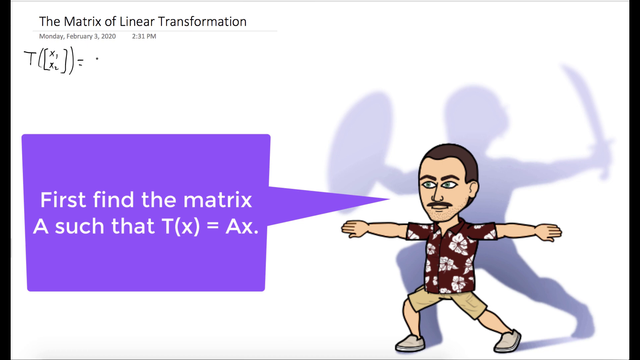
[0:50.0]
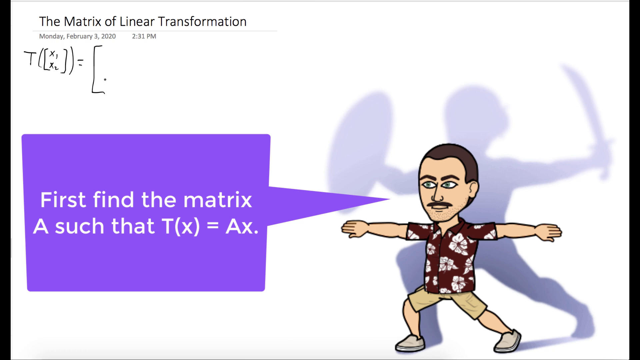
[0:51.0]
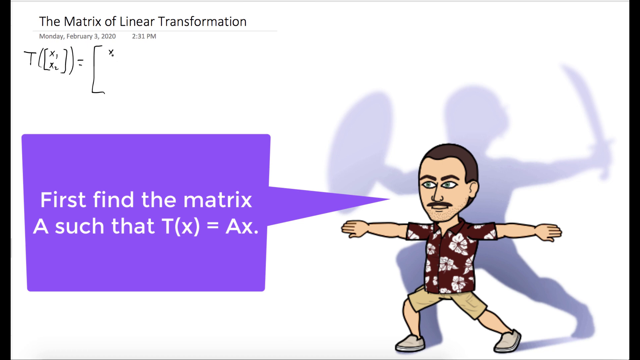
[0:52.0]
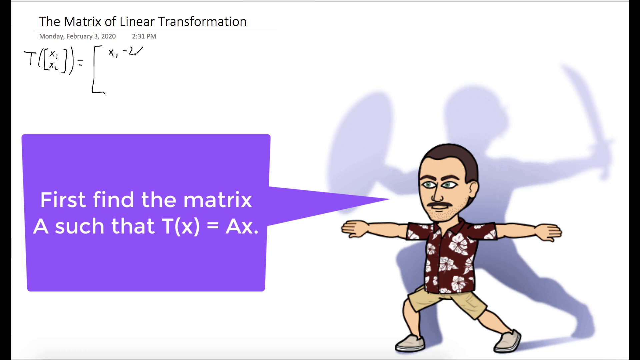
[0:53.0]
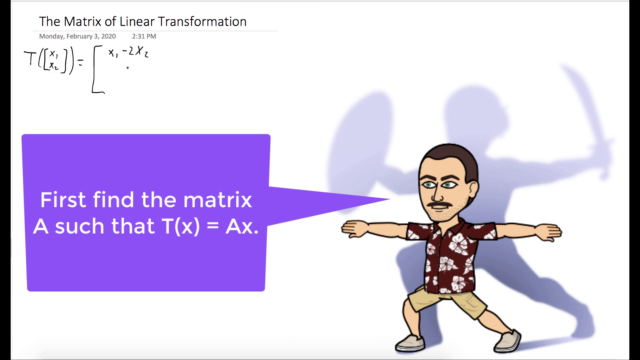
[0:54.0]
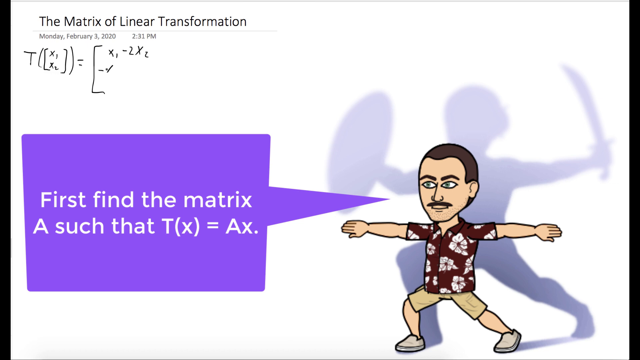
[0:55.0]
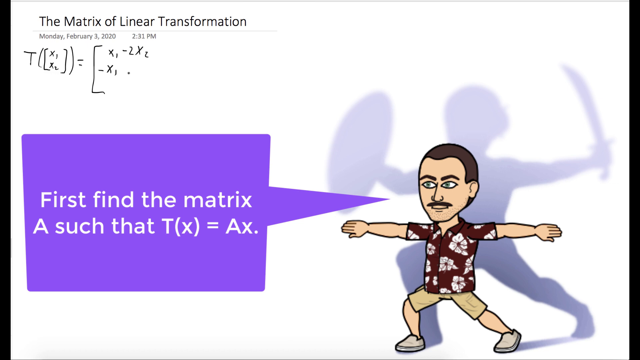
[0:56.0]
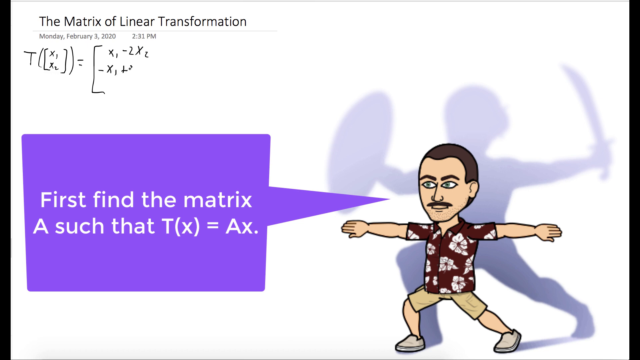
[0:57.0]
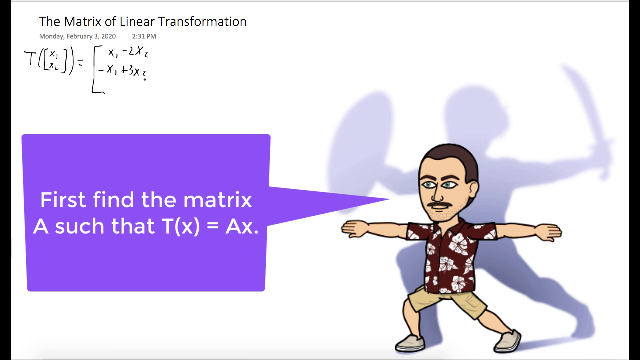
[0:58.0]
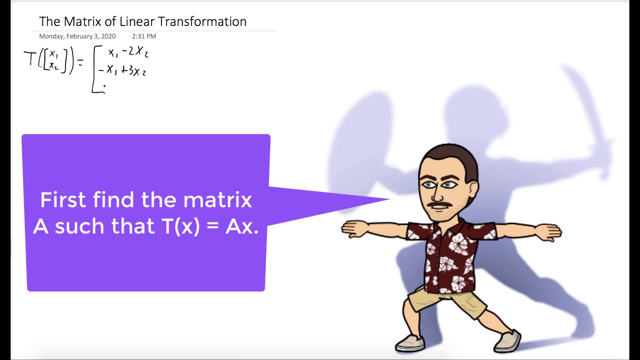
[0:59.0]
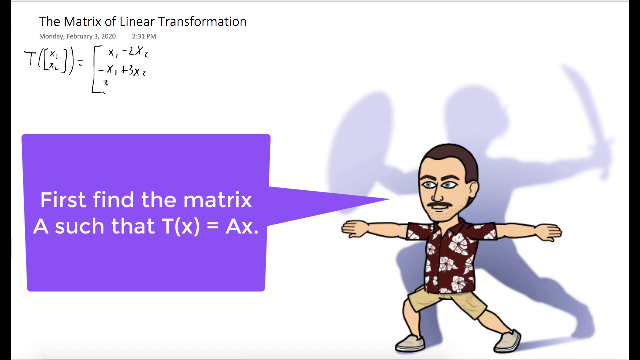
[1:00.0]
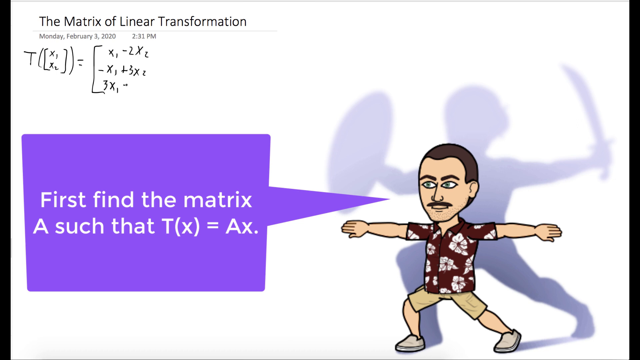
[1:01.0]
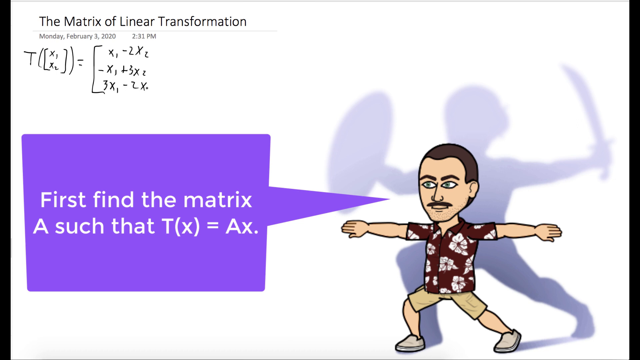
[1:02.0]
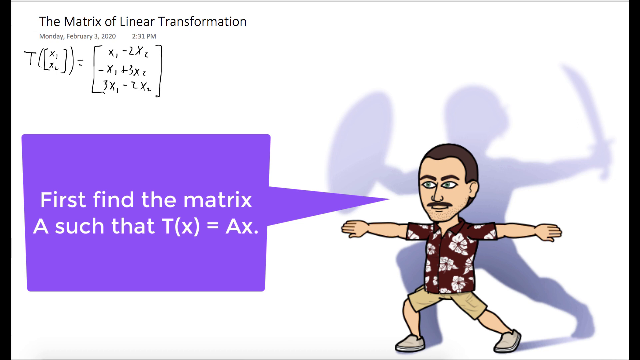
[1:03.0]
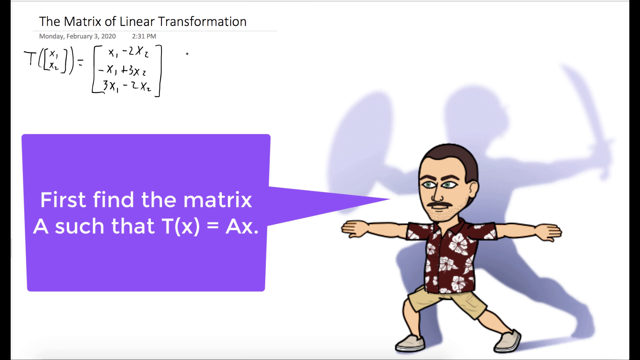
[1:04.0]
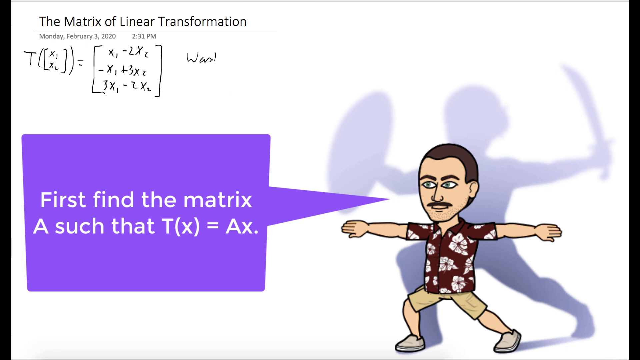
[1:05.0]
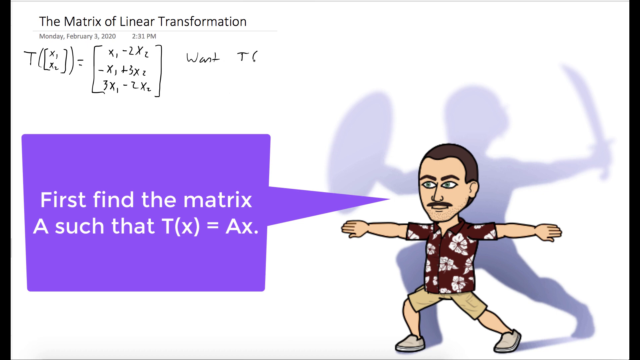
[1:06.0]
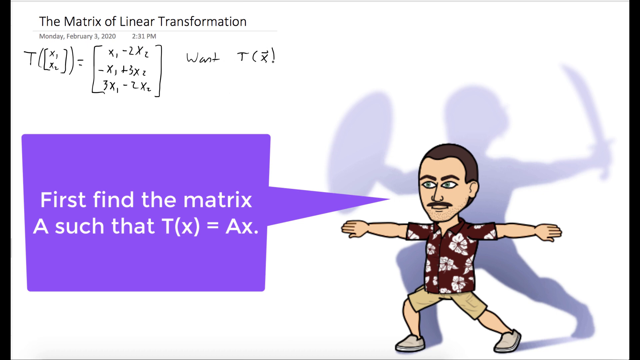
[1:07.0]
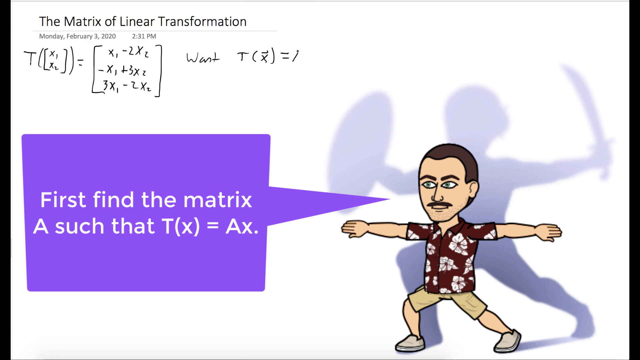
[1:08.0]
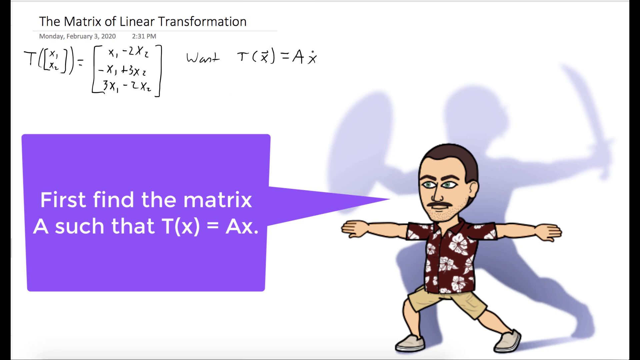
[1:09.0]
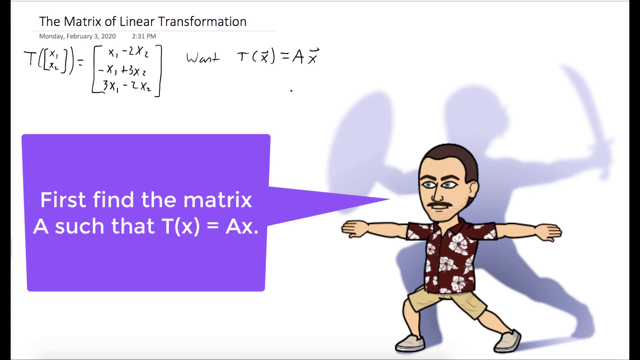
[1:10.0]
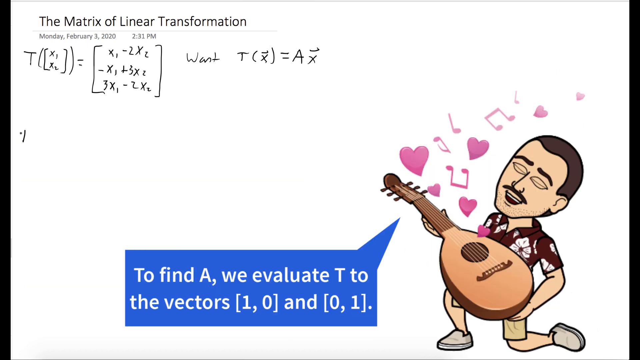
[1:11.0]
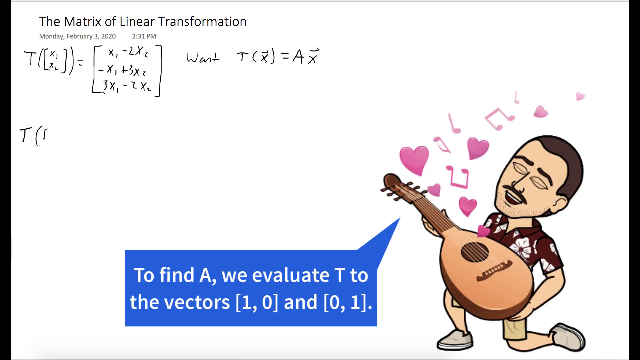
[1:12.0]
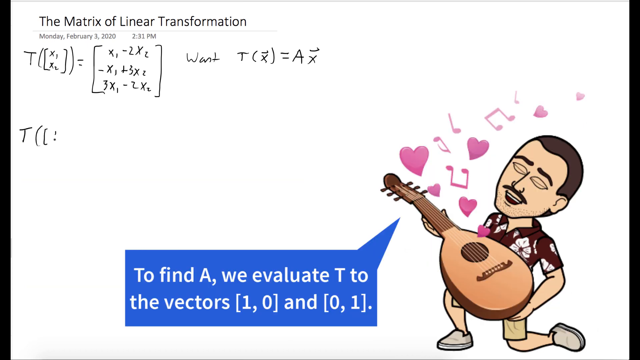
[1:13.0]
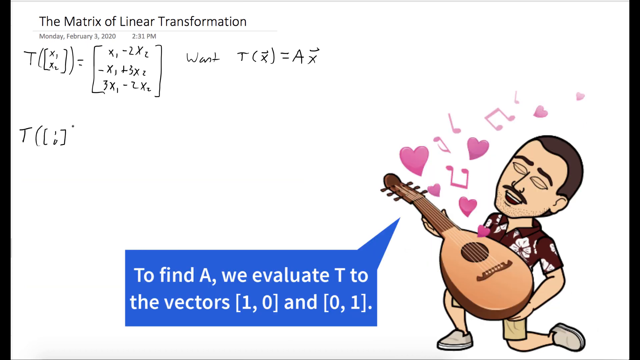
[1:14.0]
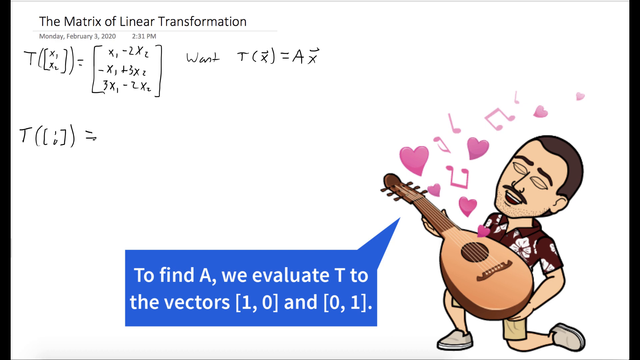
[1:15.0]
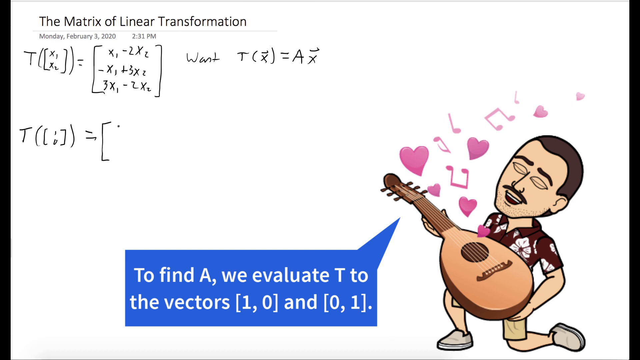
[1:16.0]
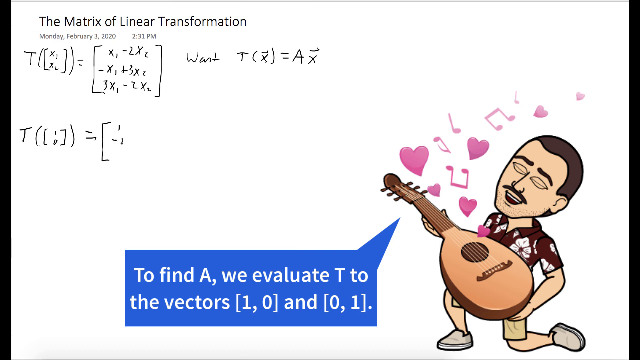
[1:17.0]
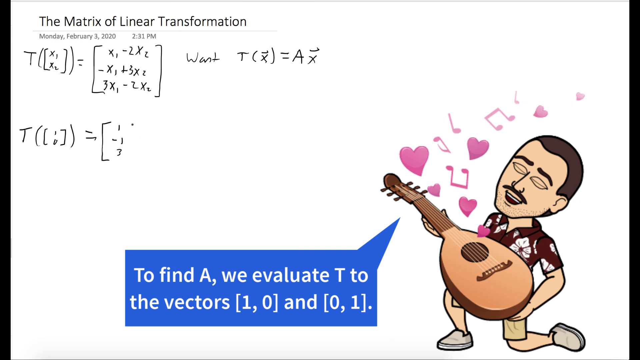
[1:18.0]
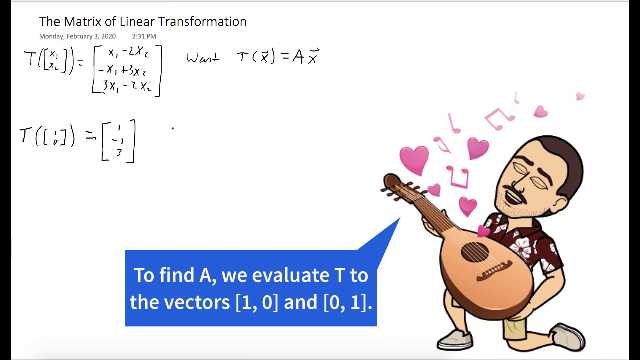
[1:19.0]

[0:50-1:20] The cartoon version of the man is doing a yoga pose that looks like warrior two, with his hands out, his right leg bent, and his left leg stretched the other way. A purple speech bubble, more of a speech box, reads "first find the matrix a such that tx equals ax." At the top left the text reads "the matrix of linear transformation" and "monday february 3rd 2020 at 2 31 p.m." He writes down the problem: T of (x1 over x2) equals (x1 minus 2x2, with negative x1 plus 3x2 right below it and 3x1 minus 2x2 at the bottom), followed by "want" T(x) equals Ax. After a while the cartoon version of him transforms into something else.